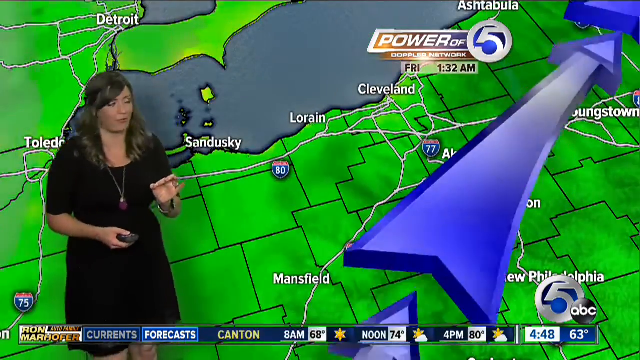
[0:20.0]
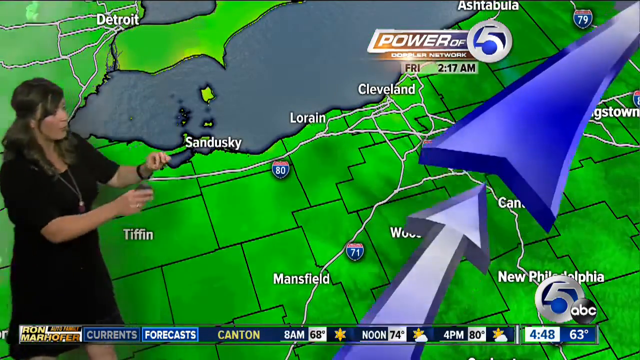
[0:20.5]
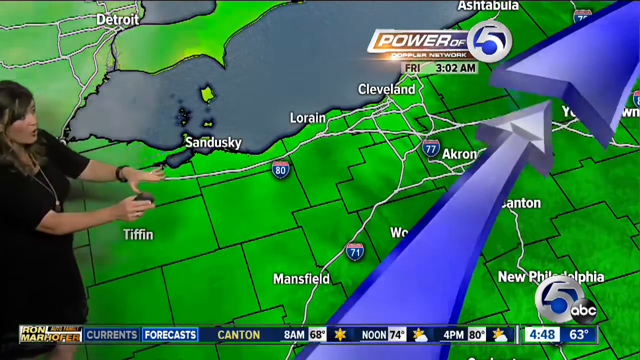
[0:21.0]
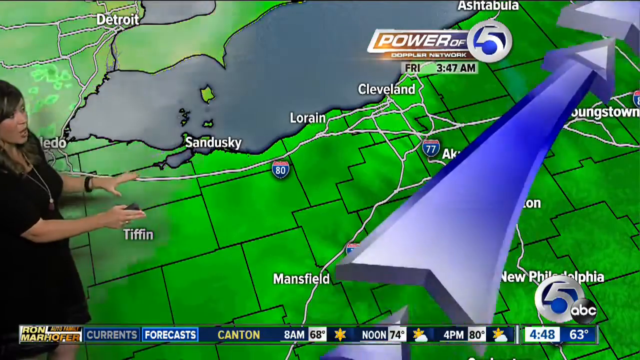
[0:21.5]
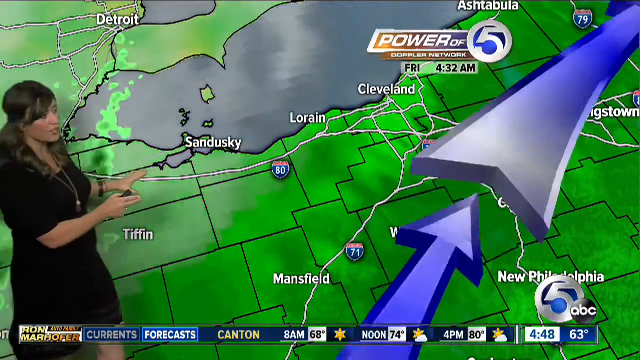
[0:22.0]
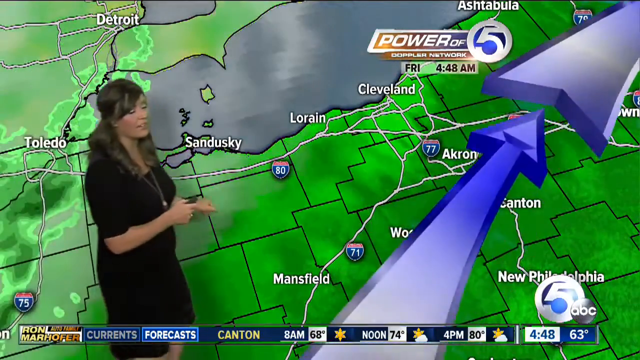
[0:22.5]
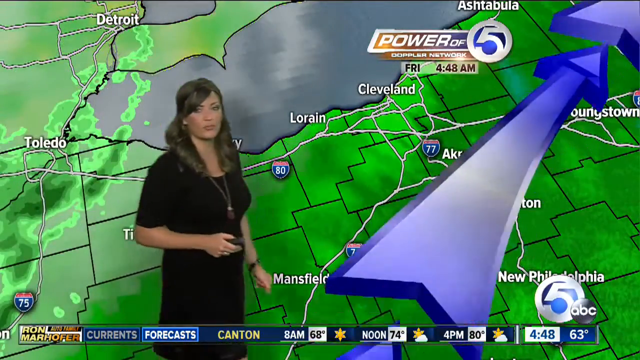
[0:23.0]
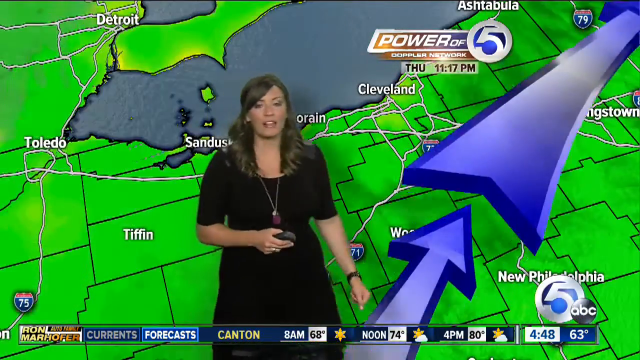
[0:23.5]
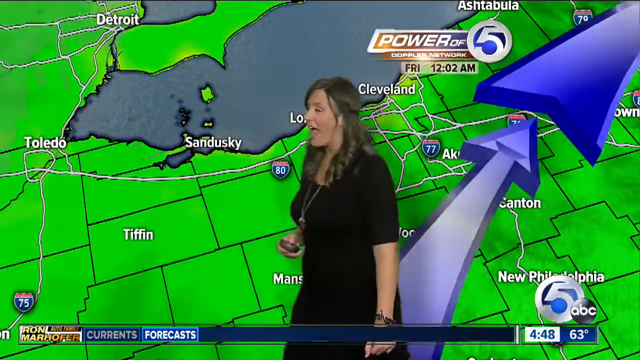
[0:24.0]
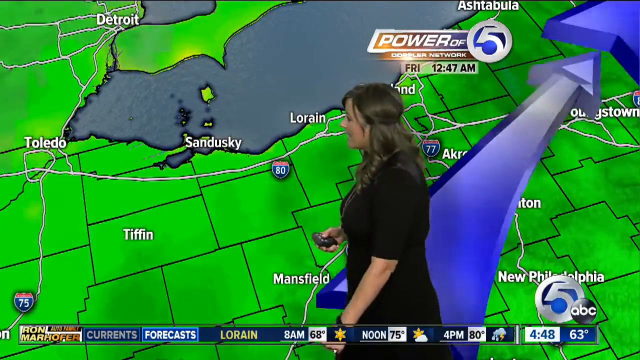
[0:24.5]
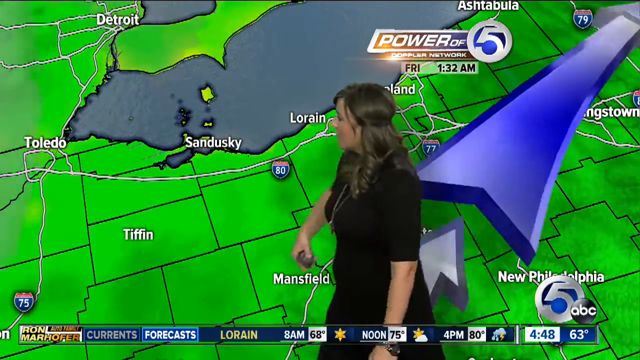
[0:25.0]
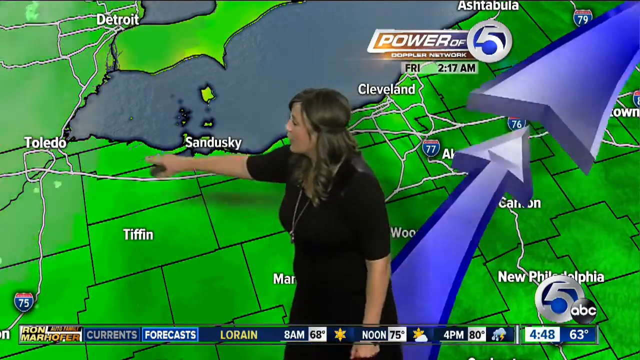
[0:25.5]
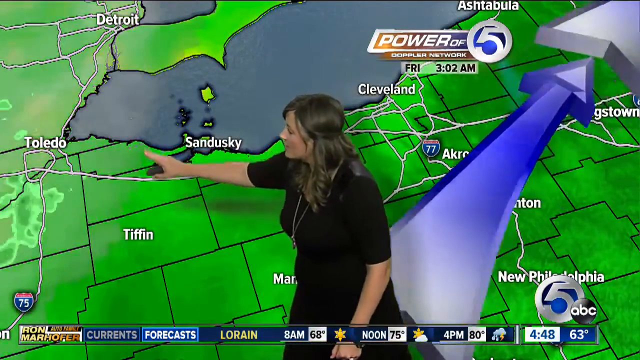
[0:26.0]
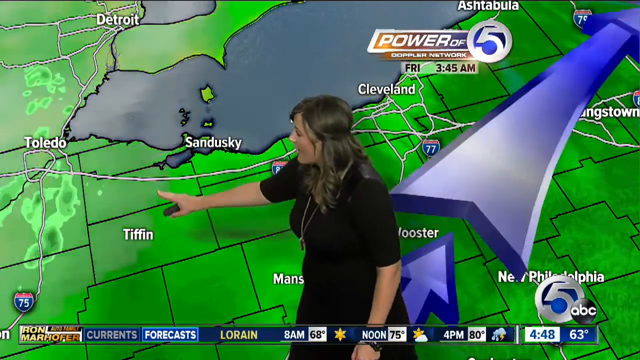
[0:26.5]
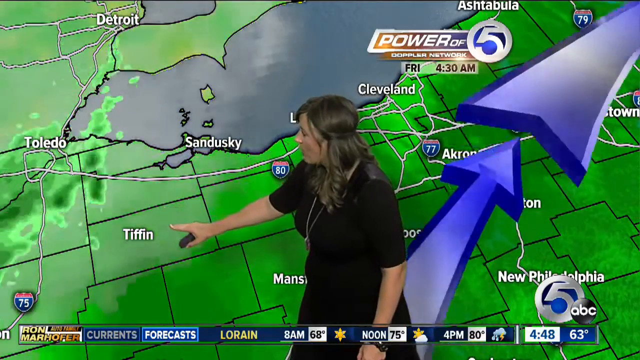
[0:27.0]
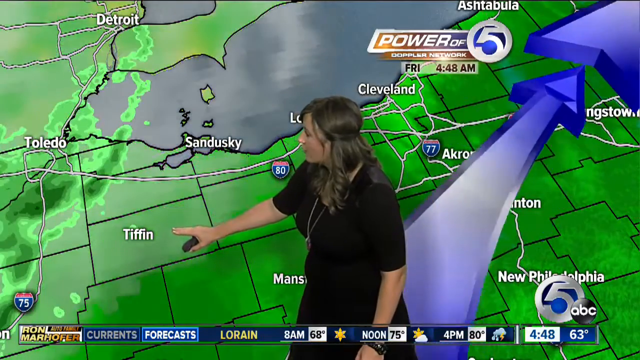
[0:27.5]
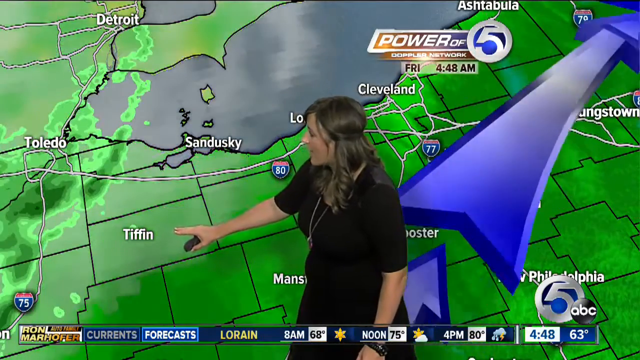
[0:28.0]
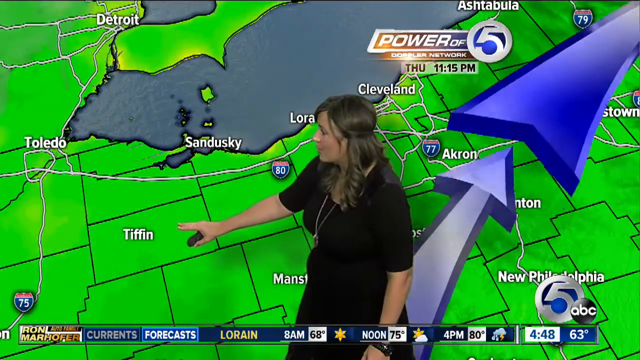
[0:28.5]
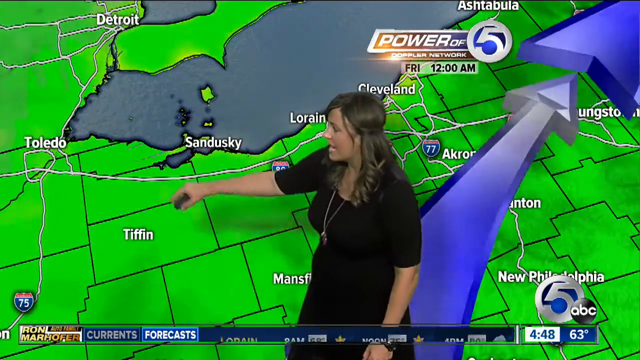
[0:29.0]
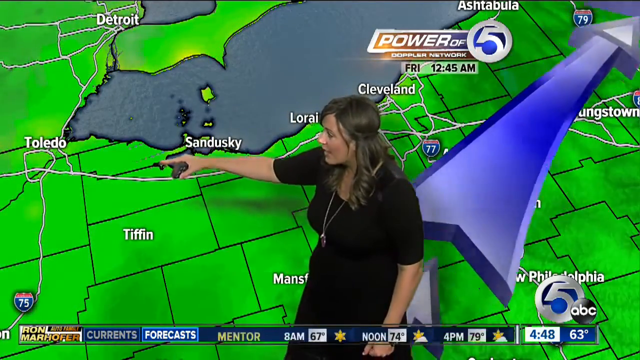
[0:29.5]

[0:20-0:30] Tracy, the weather presenter, is on screen in a short-sleeved black dress with a long chain holding a fairly large red amulet. Her hair is about four or five inches past her shoulders, coming right down to the cutout of the dress's neckline, with large roll curls on each side that turn away from center toward her shoulders. The map shows Toledo, Sandusky, Lorain, Cleveland and Mansfield, with large arrows going from bottom to top across the right side. "Power of five Doppler network" appears in the top right corner. The arrows are constantly moving.